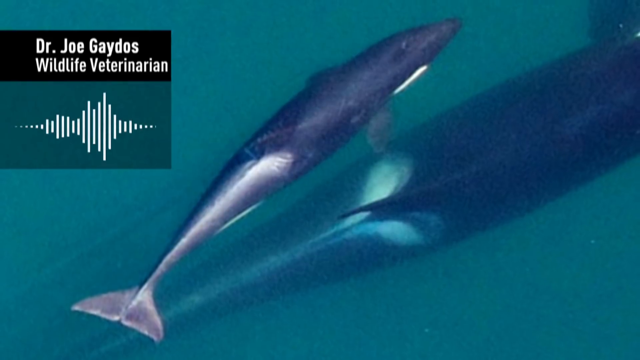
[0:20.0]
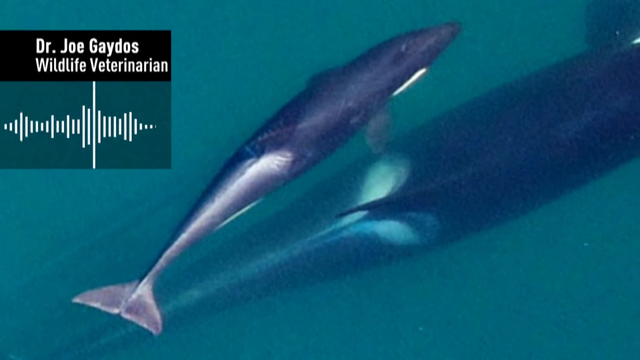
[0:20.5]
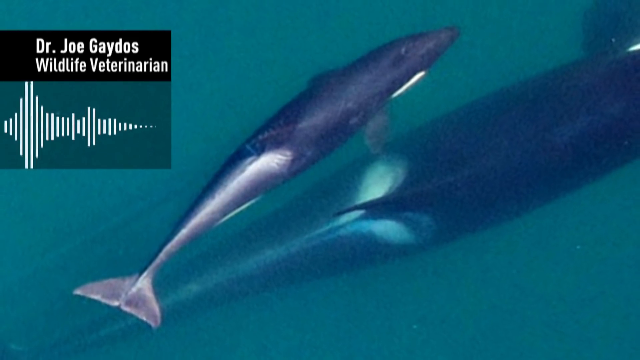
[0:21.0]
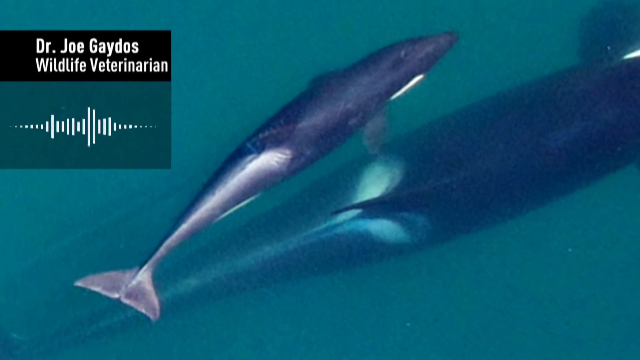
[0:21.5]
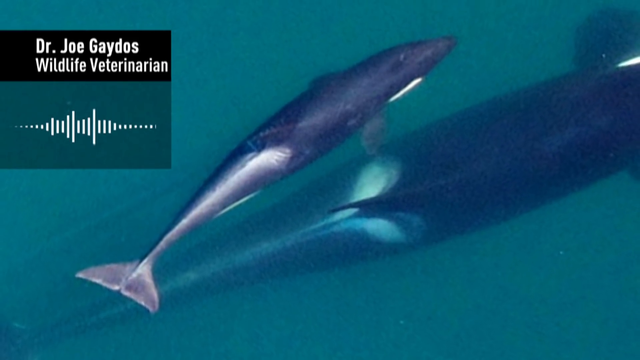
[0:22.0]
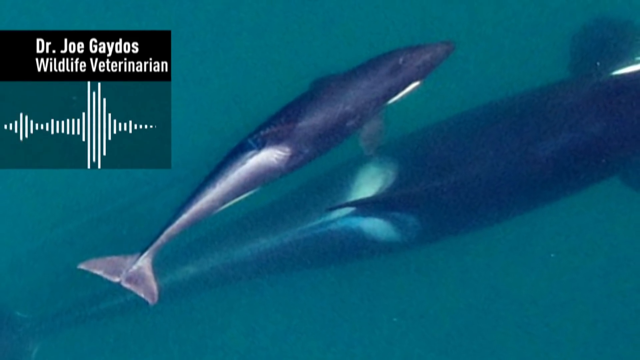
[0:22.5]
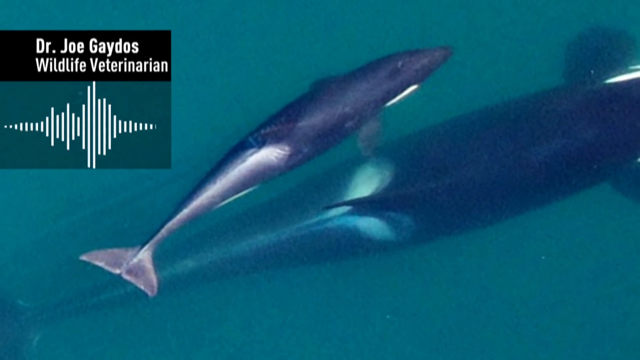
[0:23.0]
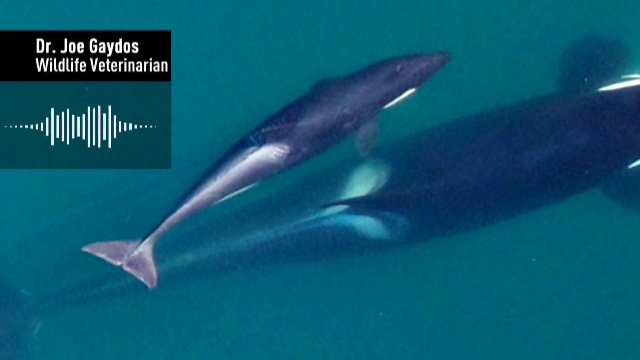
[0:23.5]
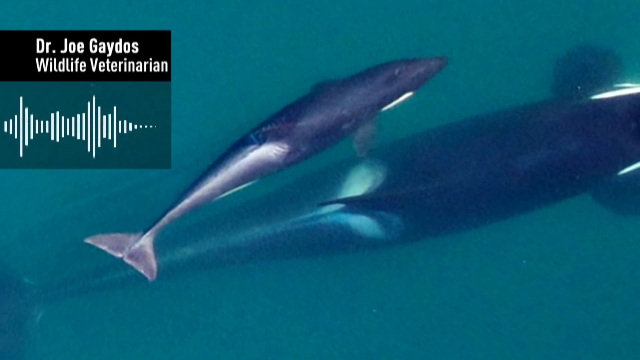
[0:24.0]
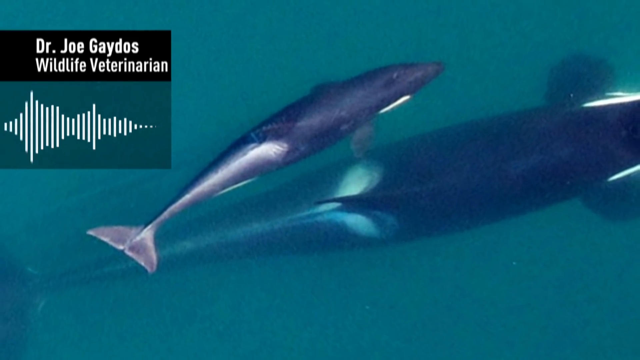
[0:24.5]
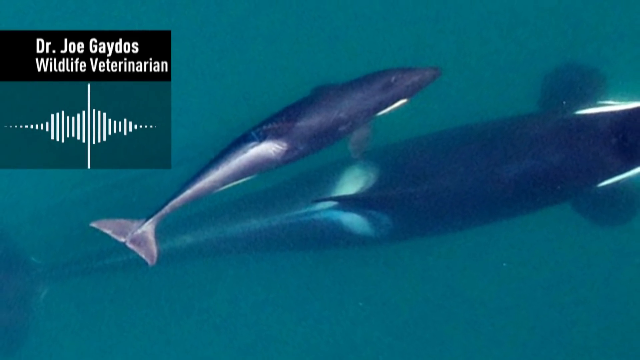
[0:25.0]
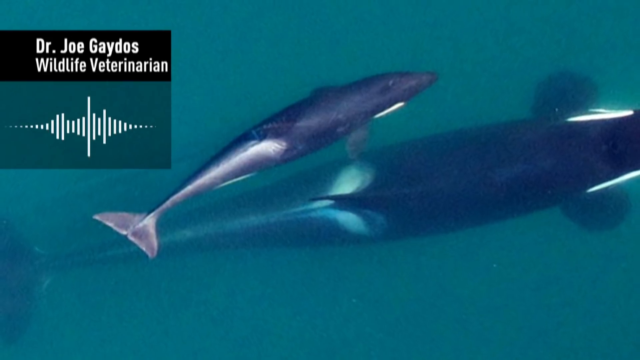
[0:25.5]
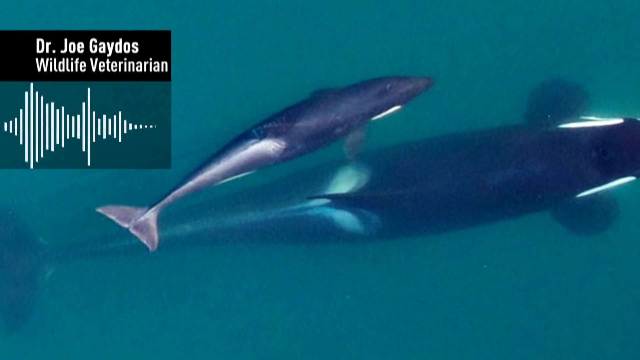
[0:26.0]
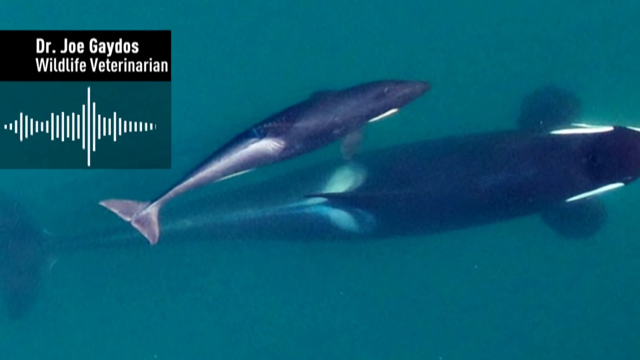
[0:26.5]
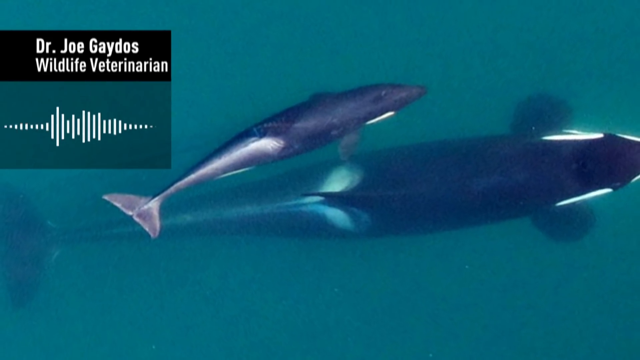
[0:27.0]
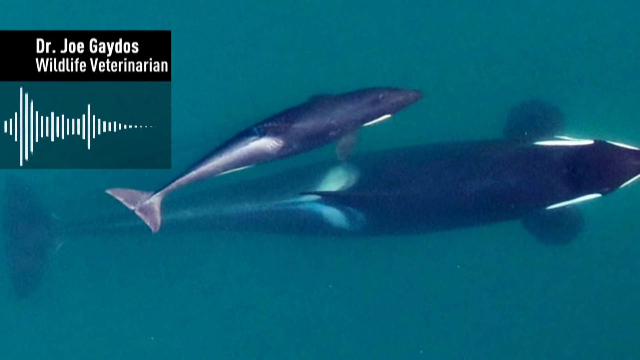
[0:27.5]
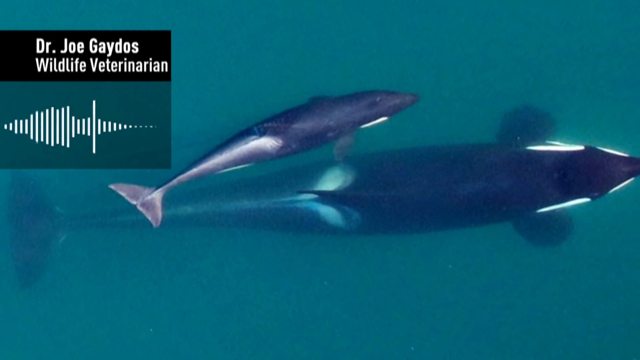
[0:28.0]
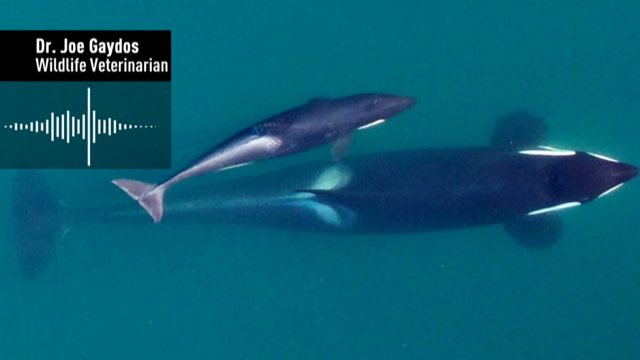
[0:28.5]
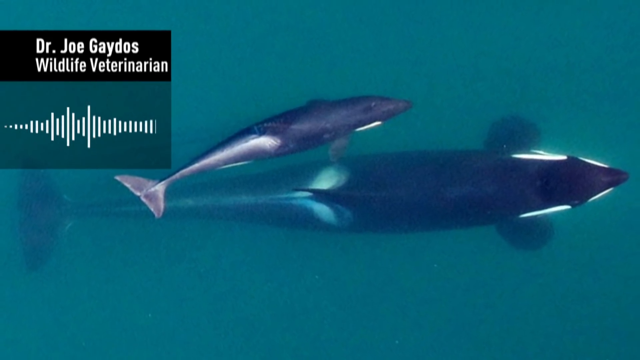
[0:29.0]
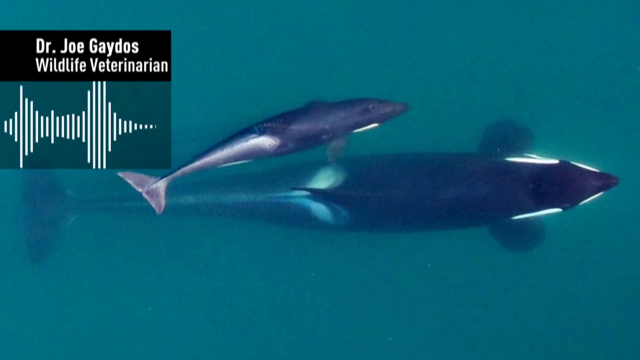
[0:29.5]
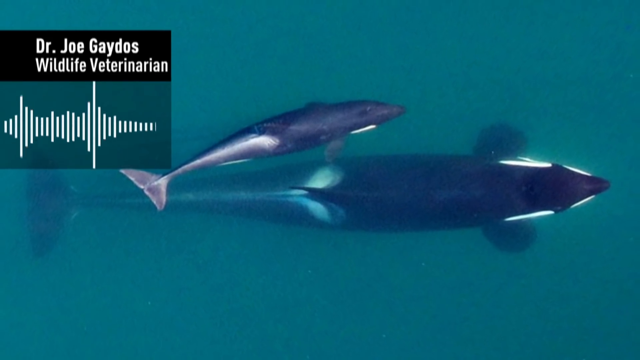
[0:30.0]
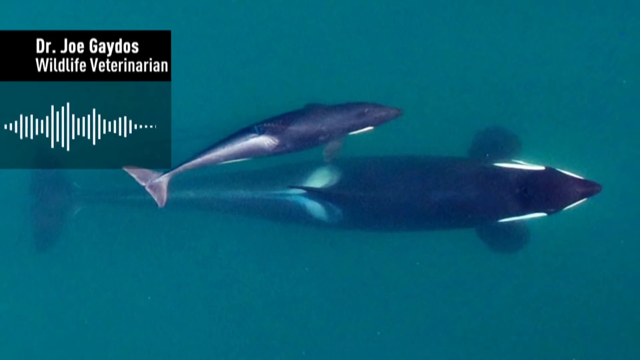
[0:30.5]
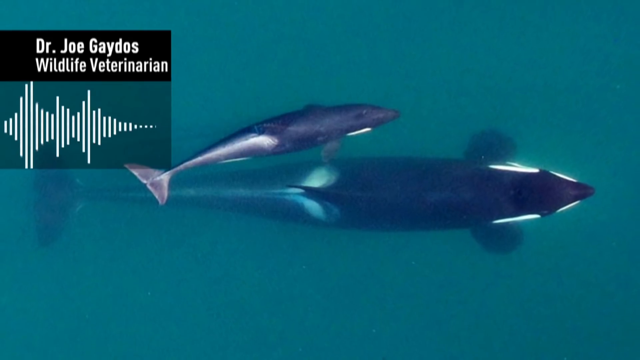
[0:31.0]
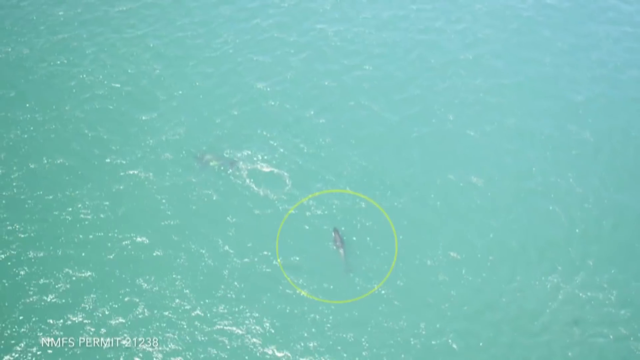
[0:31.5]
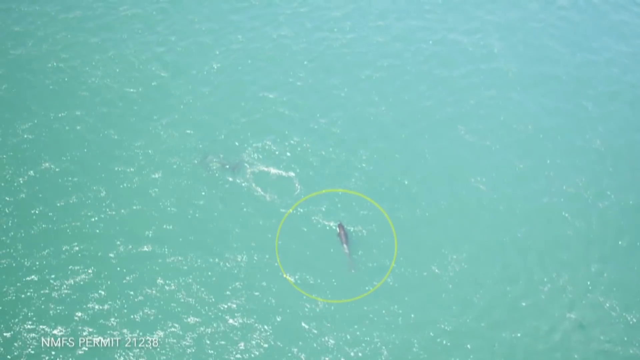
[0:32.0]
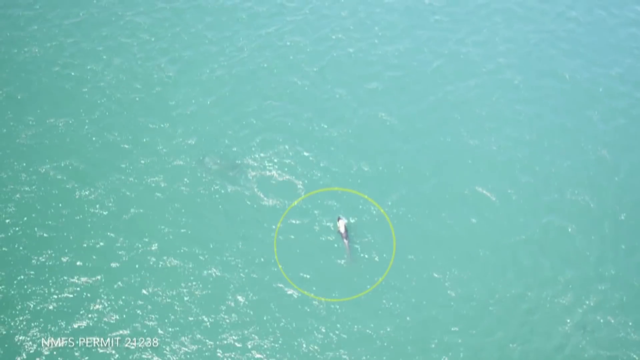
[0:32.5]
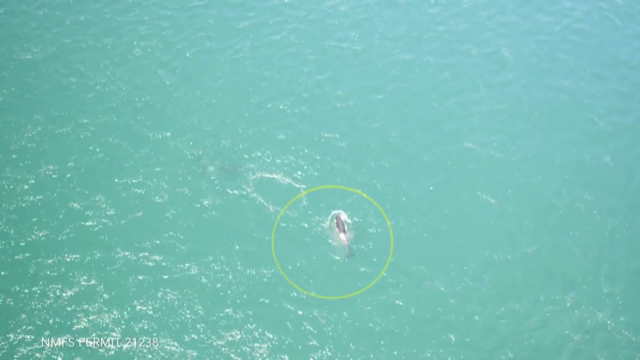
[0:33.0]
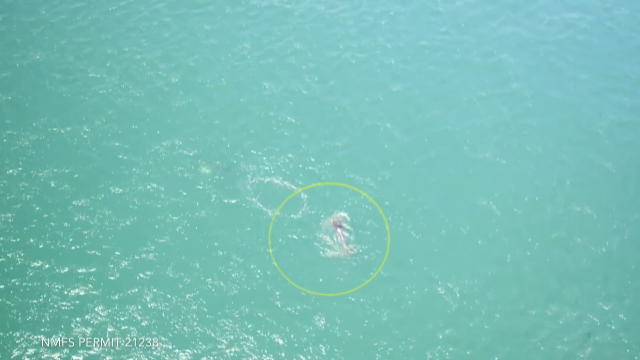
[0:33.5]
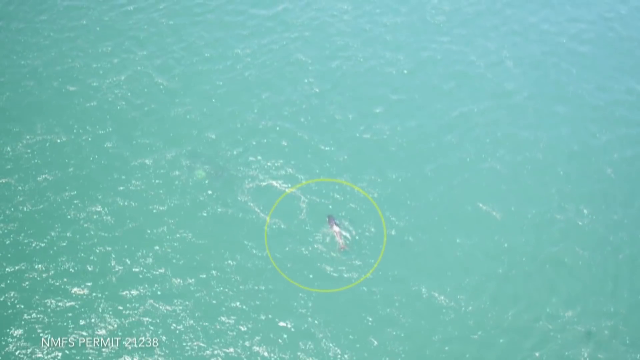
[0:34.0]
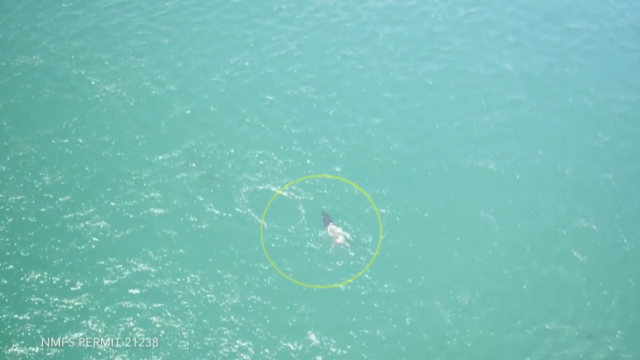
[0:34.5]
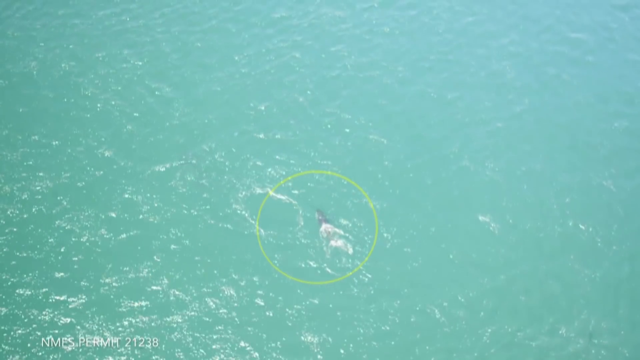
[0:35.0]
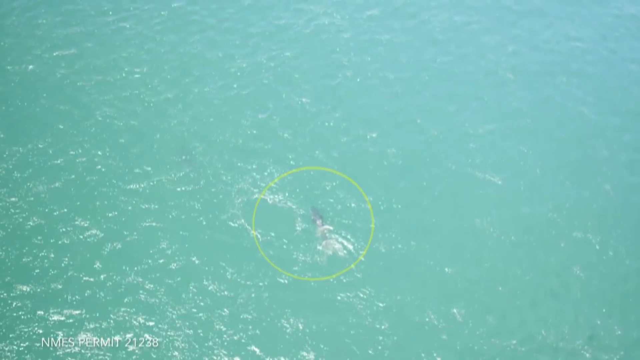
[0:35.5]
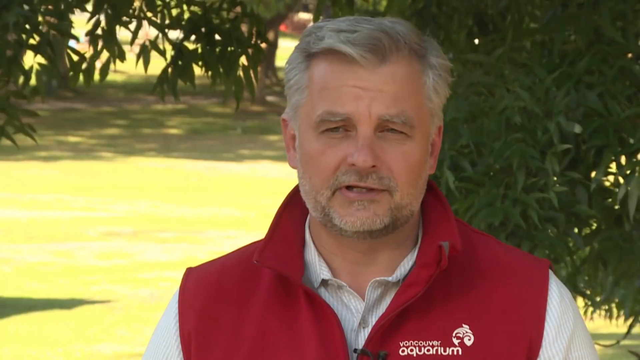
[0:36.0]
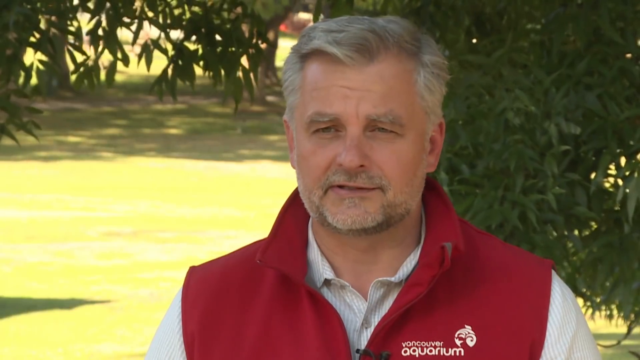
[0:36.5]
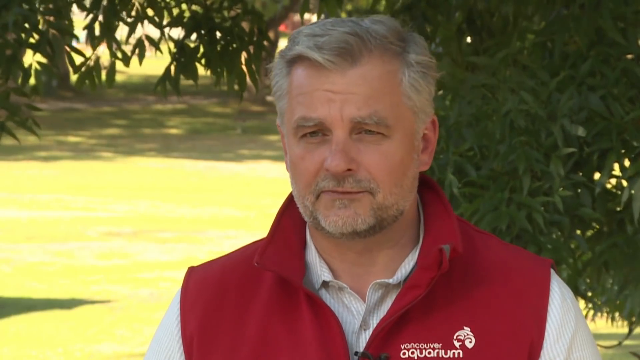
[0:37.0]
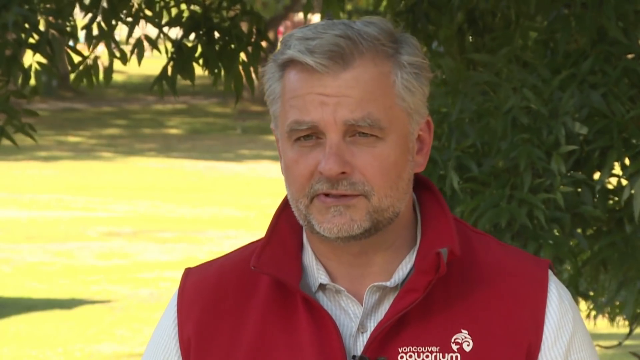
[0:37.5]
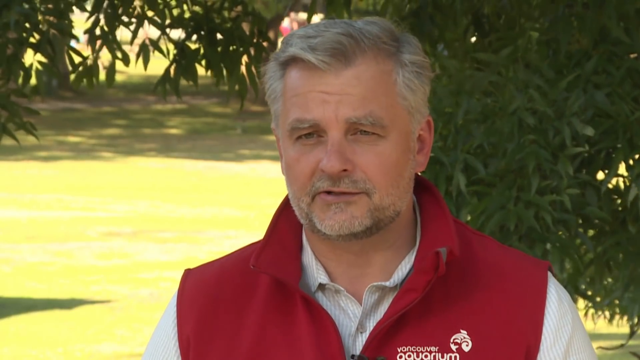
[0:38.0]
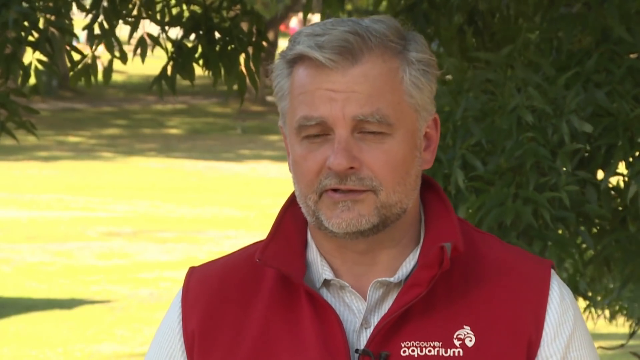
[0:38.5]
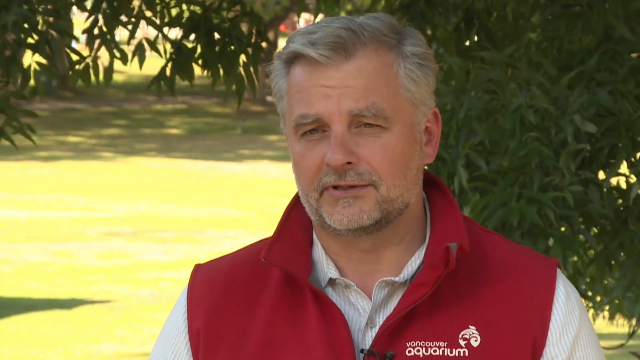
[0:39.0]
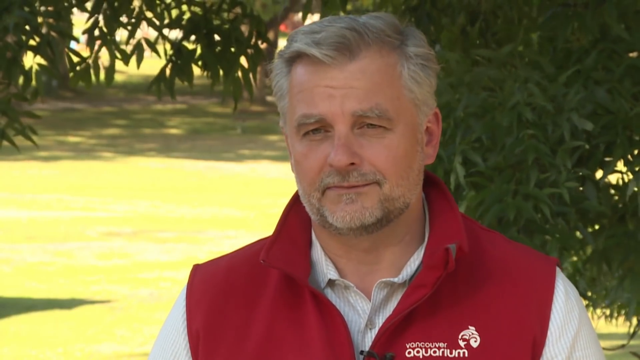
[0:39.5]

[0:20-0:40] A dolphin is seen swimming from a distance, circled with a green highlight. A man wearing a red jacket with a white shirt underneath then appears; he seems to be talking about something and looks to be between 46 and 48 years old. Behind him are neatly cut green grass and green trees, in what looks like some kind of park, and he is standing in the shadow of a tree.